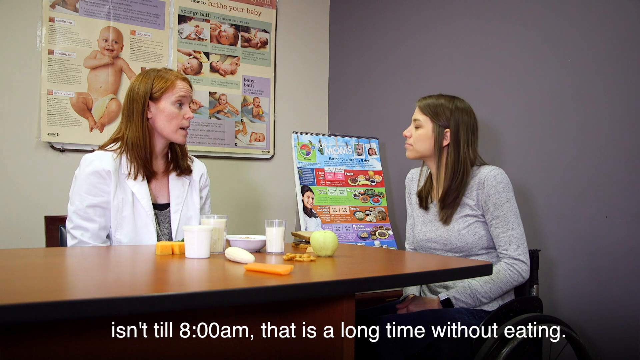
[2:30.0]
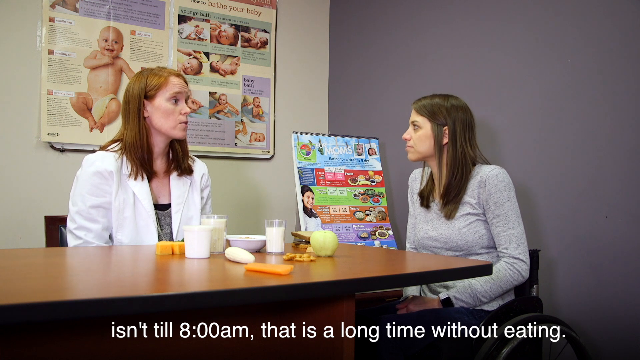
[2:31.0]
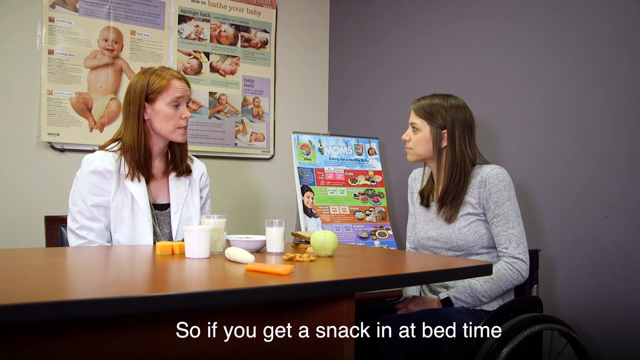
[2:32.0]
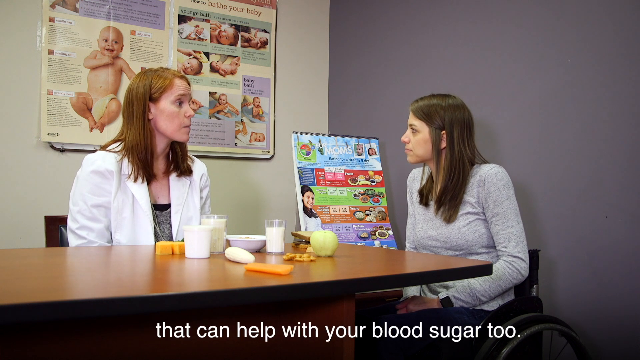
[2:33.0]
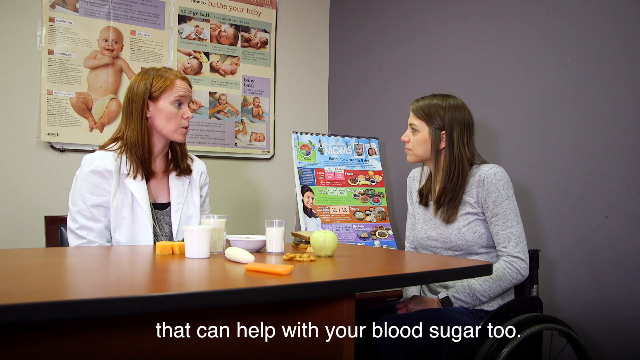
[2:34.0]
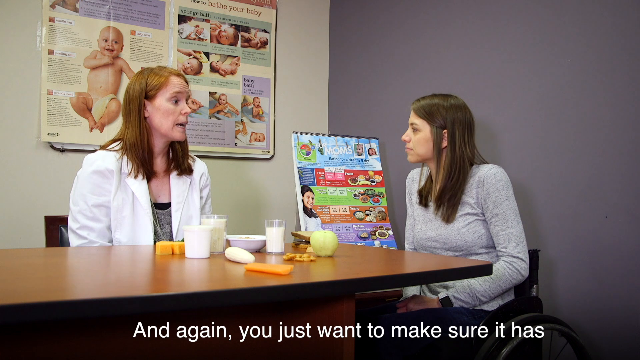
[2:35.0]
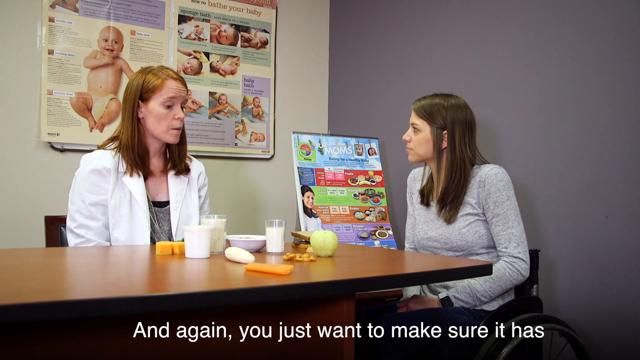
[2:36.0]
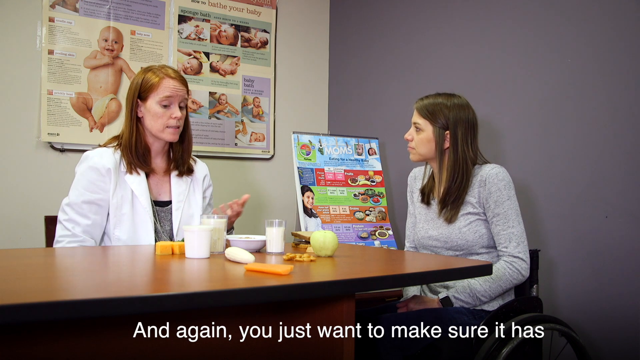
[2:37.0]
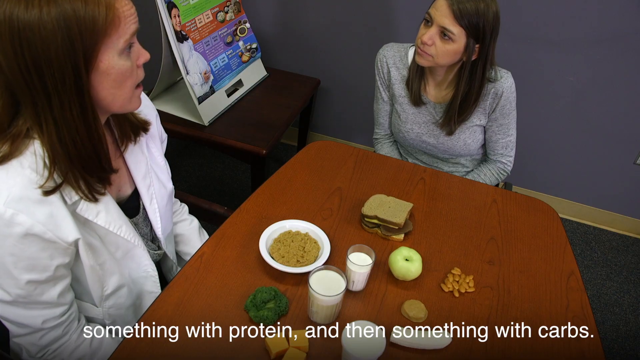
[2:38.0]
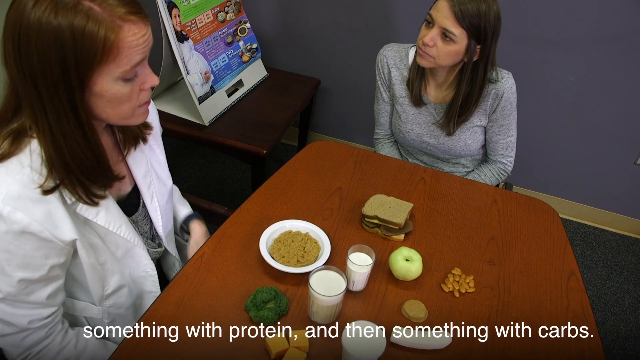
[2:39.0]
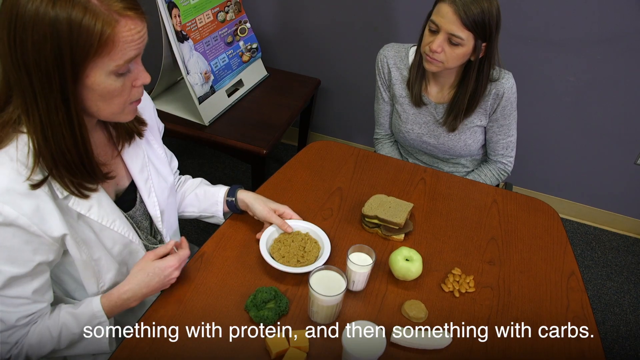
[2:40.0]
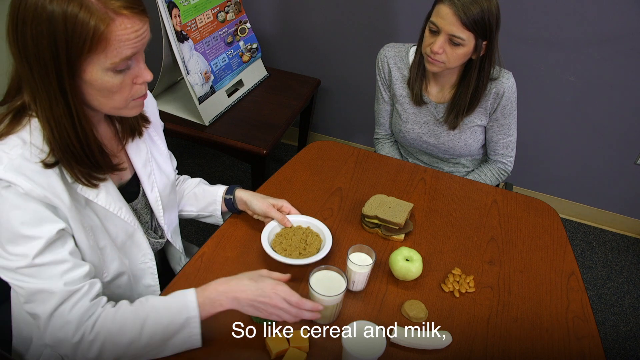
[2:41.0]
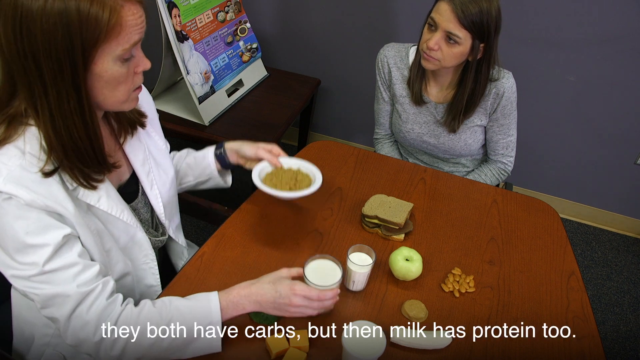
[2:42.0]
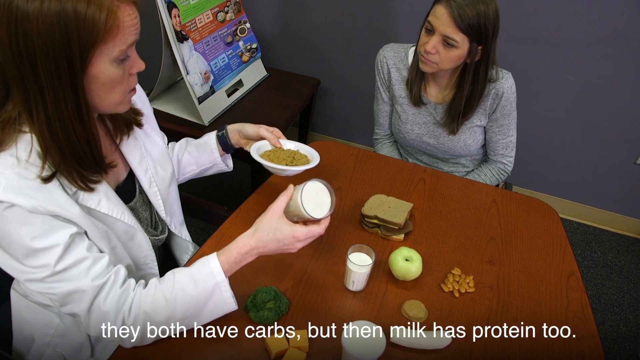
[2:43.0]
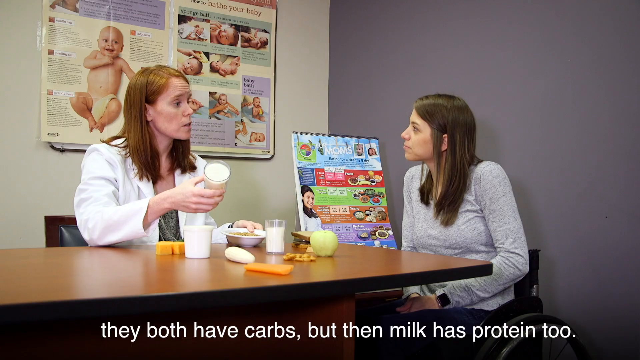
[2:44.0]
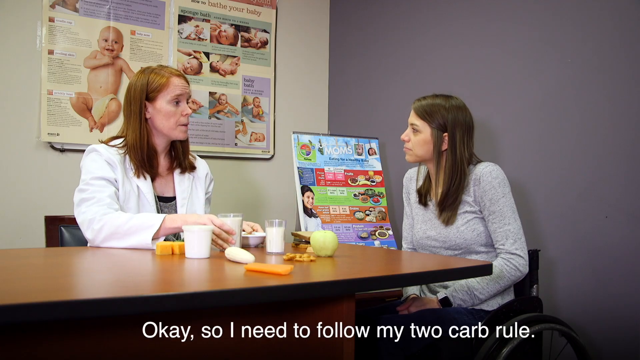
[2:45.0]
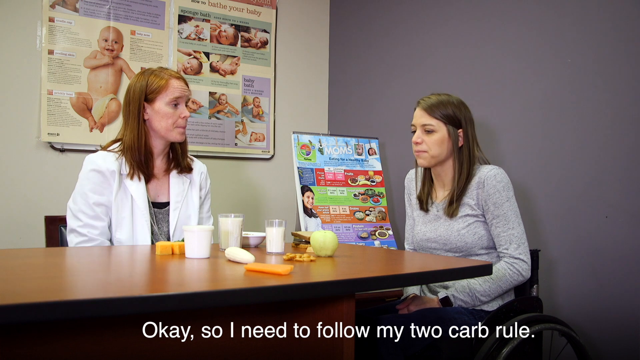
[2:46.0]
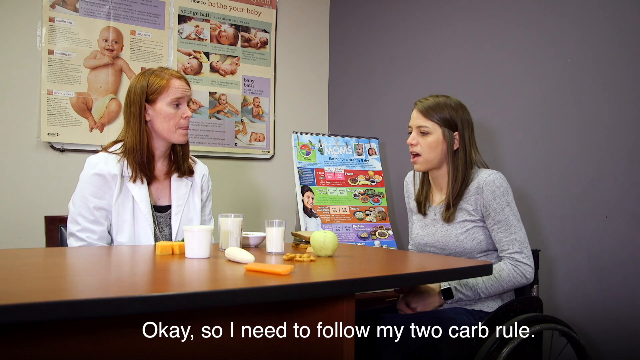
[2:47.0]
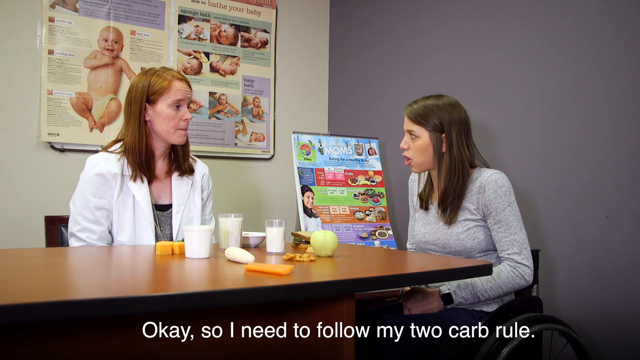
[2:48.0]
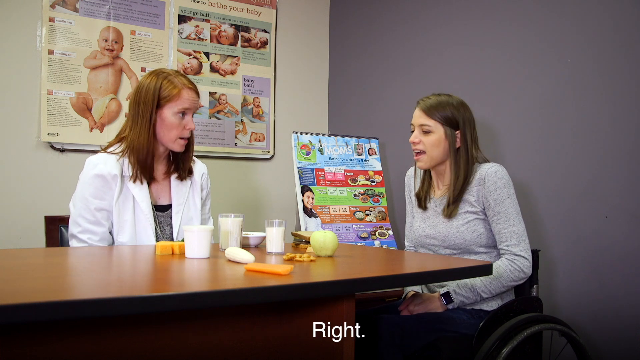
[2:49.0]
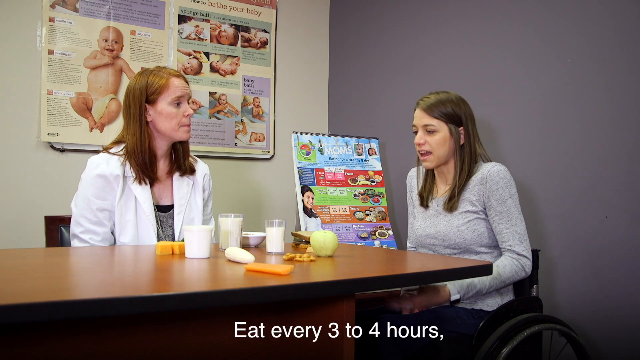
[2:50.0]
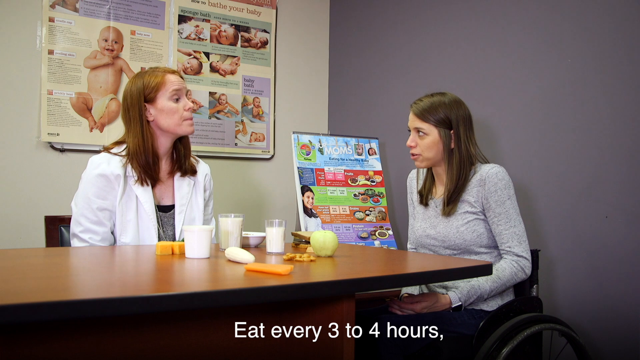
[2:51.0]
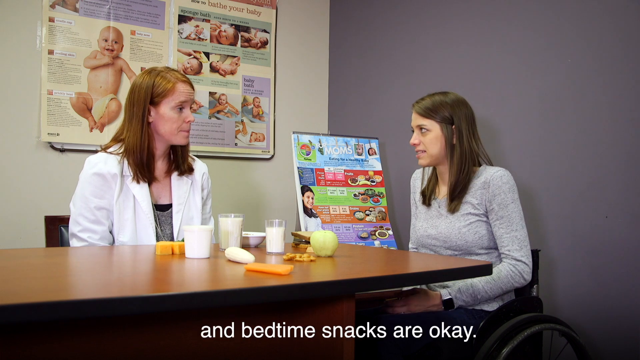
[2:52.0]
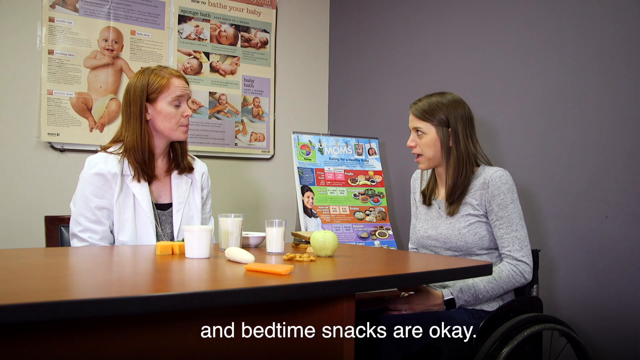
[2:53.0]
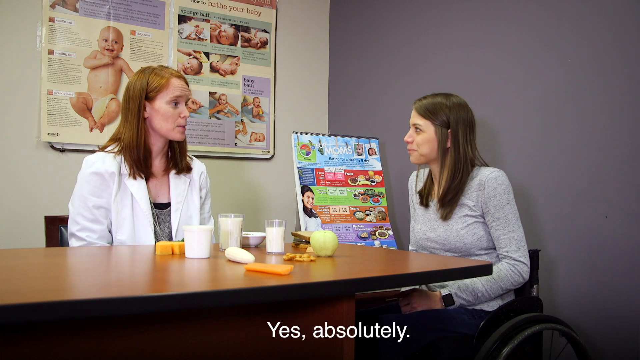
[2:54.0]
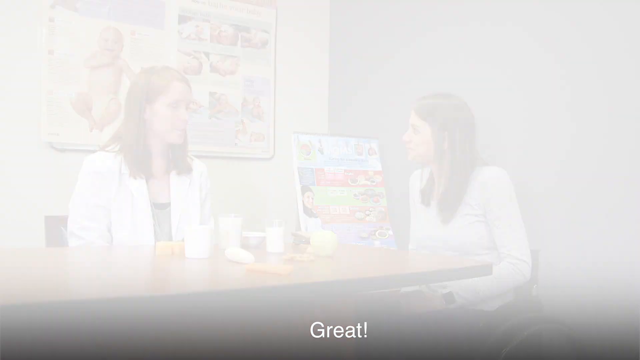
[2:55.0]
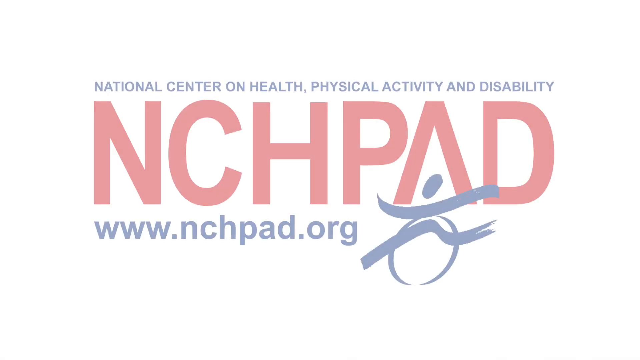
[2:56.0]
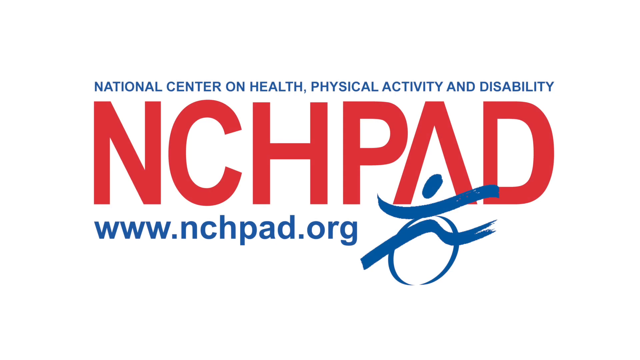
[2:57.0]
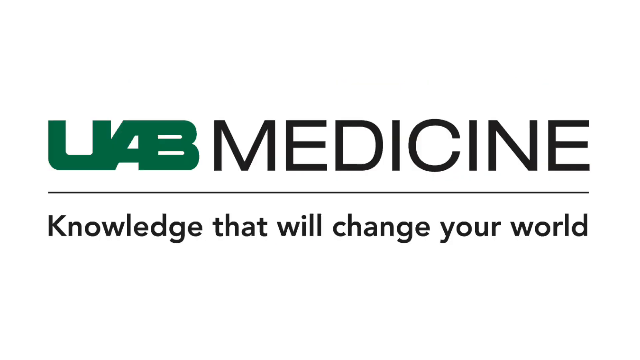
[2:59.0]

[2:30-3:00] The doctor and the patient continue talking about nutrition. The doctor sits on the left side of the screen, wearing a white medical coat. They sit on both sides of a table covered with a bunch of mock food, apparently used to illustrate her points. The doctor says a bedtime snack can help with blood sugar and should have protein and carbs, such as cereal and milk. The patient says she needs to follow her two-carb rule, and the doctor agrees: eat every three to four hours, and bedtime snacks are okay. A logo then pops up on the screen that says "UAB Medicine, knowledge that will change your world."